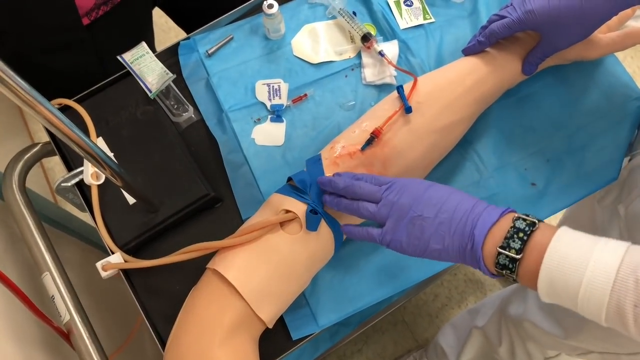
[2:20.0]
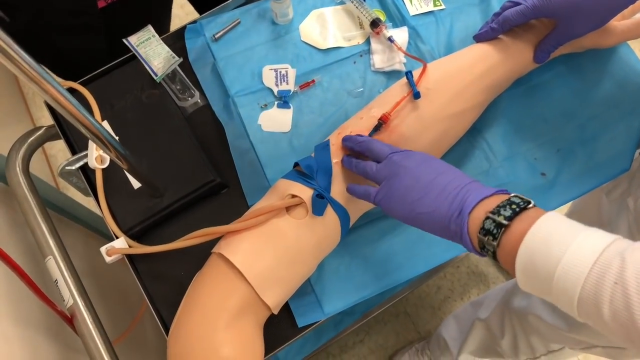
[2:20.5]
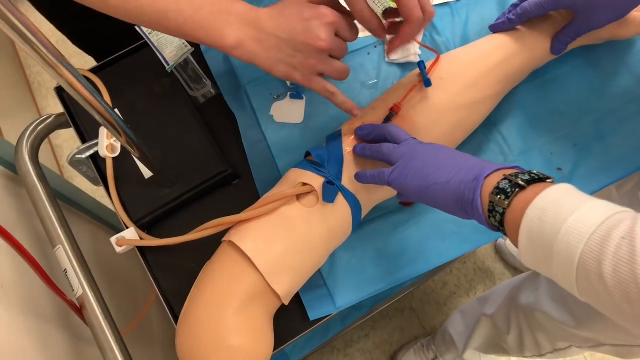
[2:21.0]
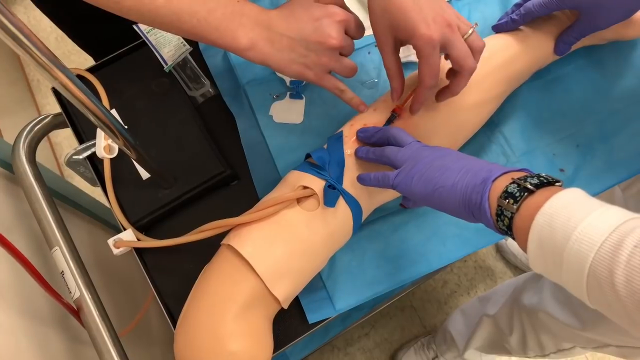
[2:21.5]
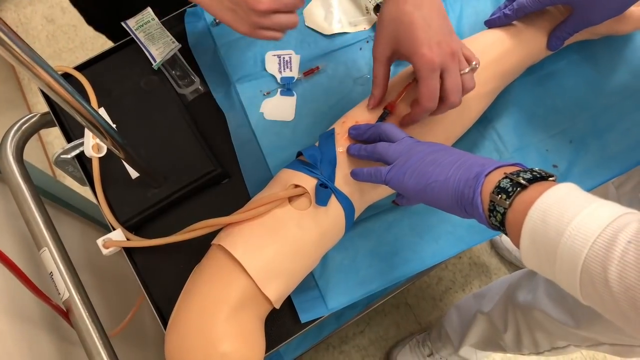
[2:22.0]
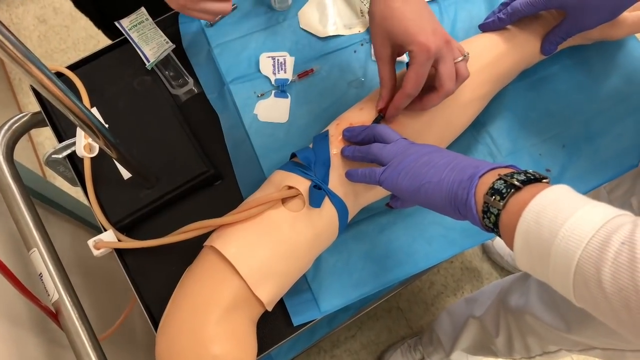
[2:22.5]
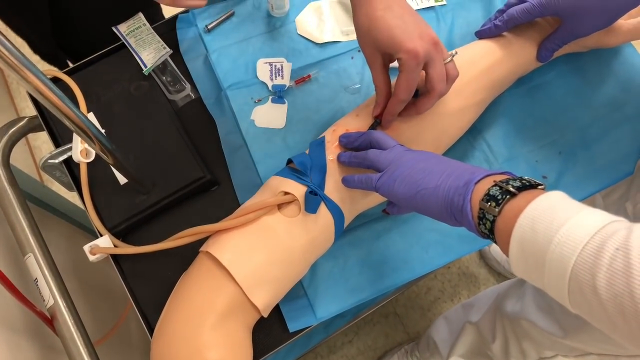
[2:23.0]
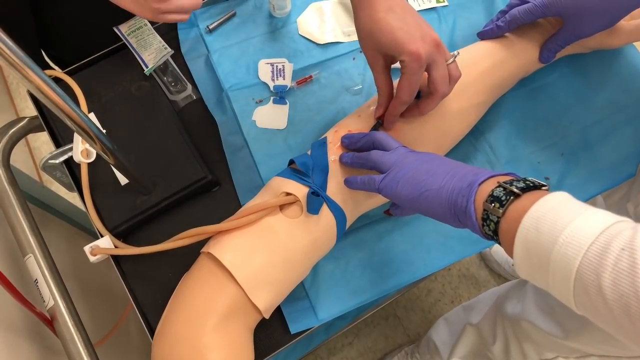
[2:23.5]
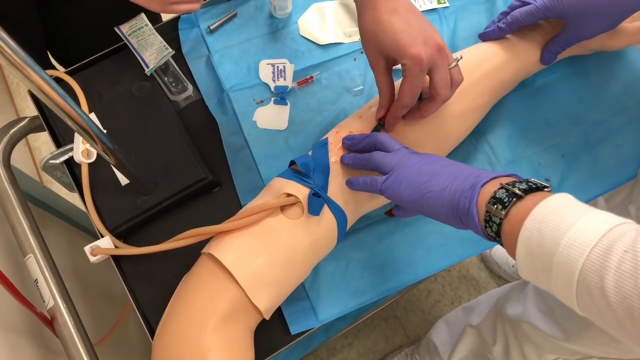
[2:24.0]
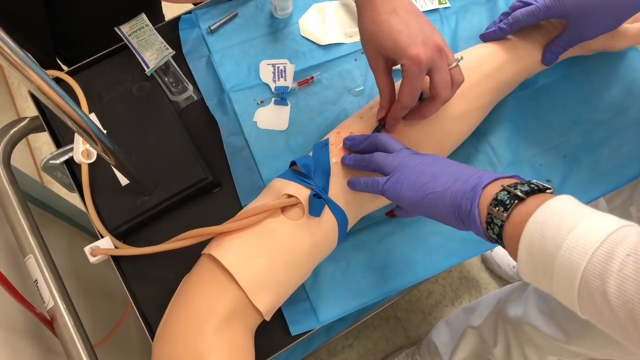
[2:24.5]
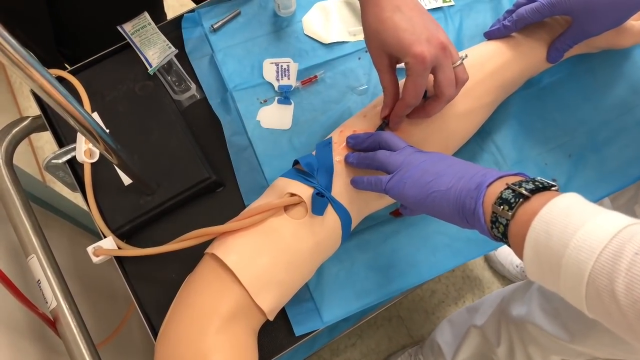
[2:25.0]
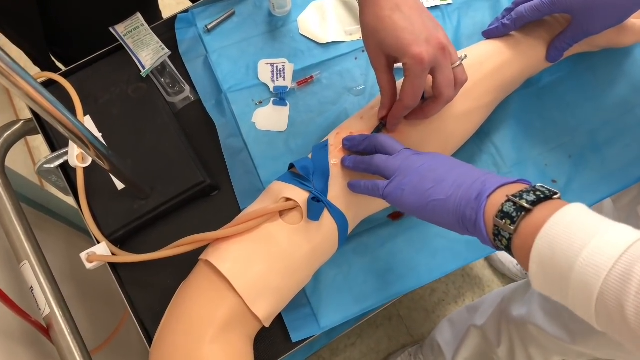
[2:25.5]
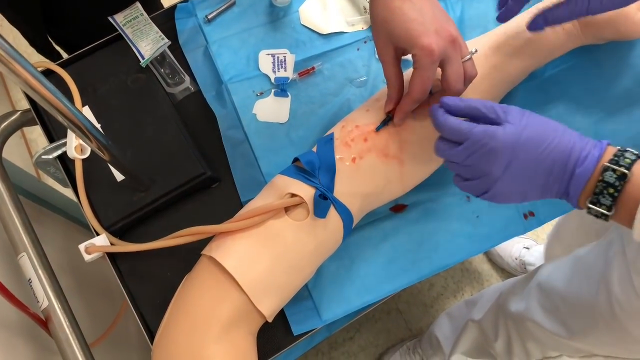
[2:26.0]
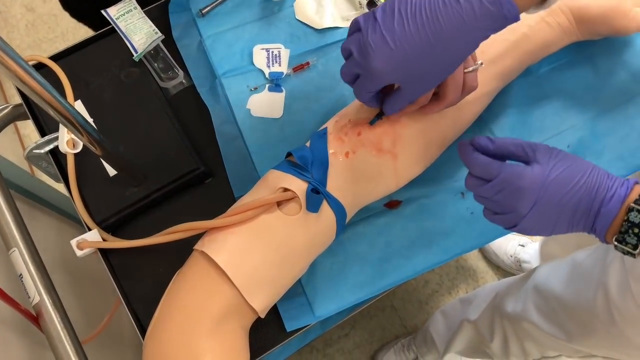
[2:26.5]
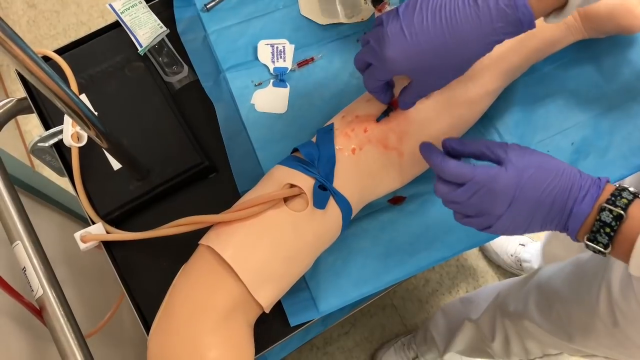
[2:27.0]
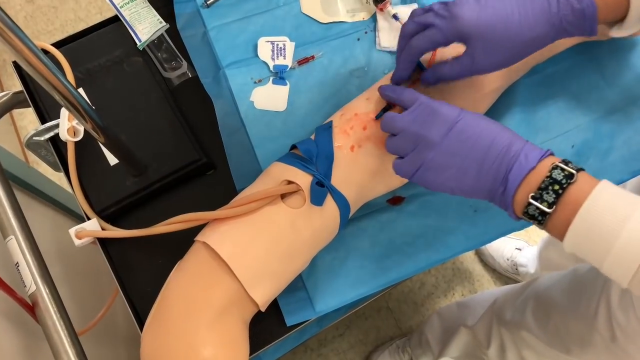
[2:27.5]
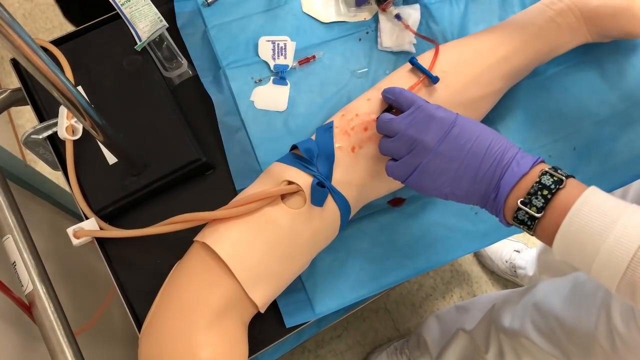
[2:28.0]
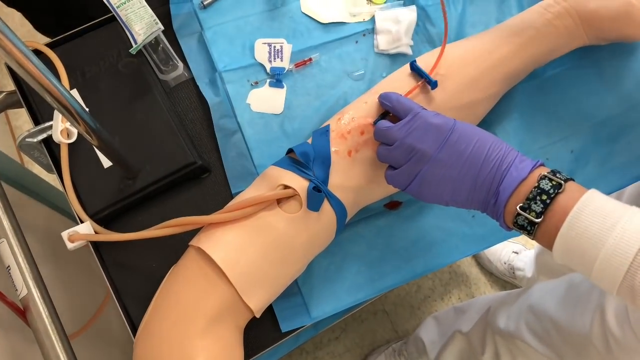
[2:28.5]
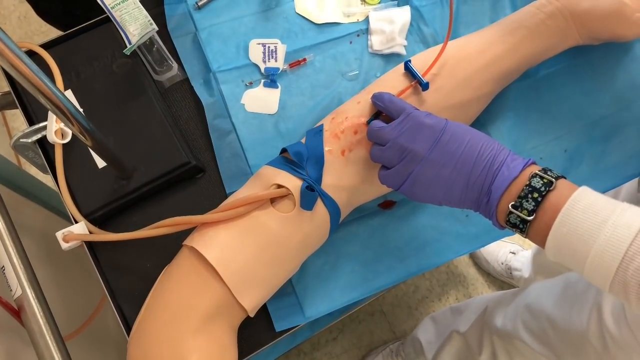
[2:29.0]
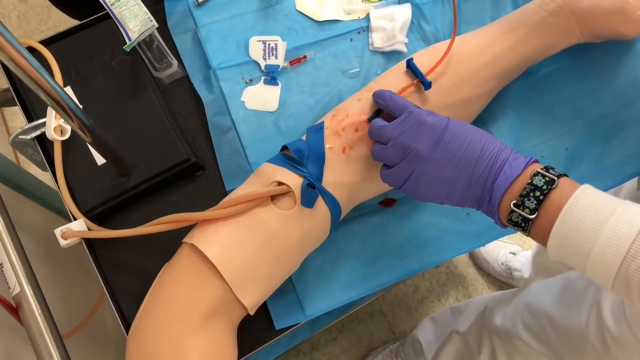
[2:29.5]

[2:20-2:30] An aerial view shows a black cart holding some medical supplies and a practice phlebotomy arm. The arm is lying on the elbow side, palm face up, with the forearm exposed. Inserted into it is a medical needle attached to a tube, and the tube is attached to a vial. Red liquid, blood, is being extracted from the practice arm into the vial. A medical professional wearing purple gloves is active, and another medical professional appears to be explaining and guiding the one with purple gloves.